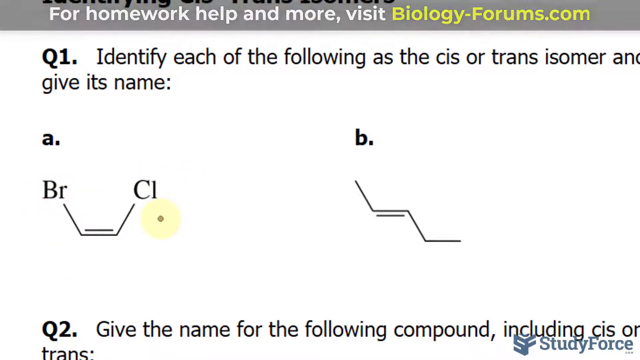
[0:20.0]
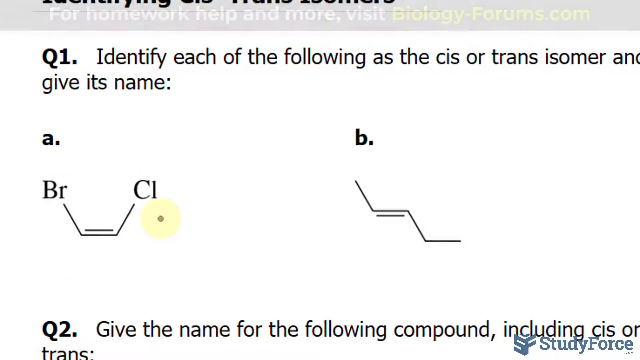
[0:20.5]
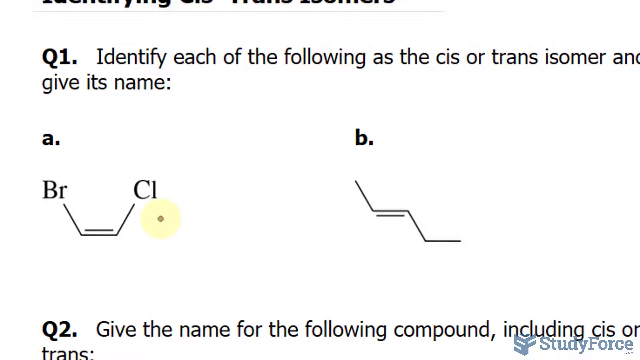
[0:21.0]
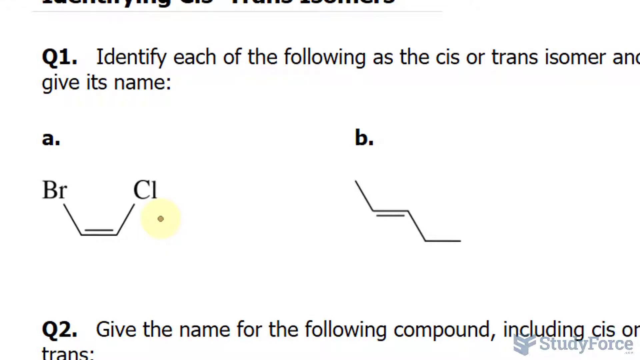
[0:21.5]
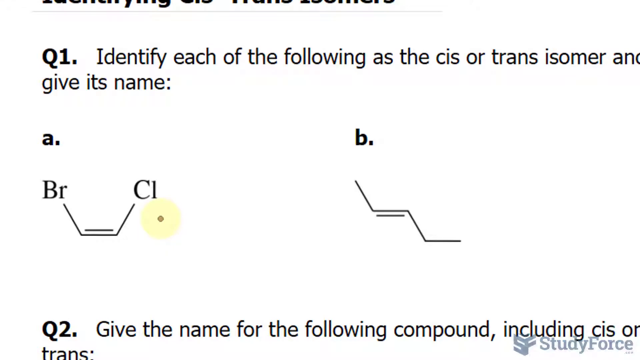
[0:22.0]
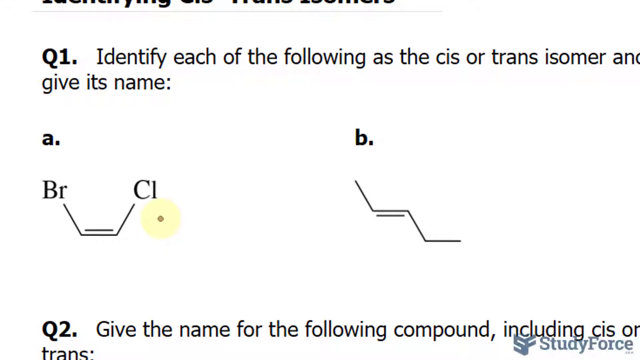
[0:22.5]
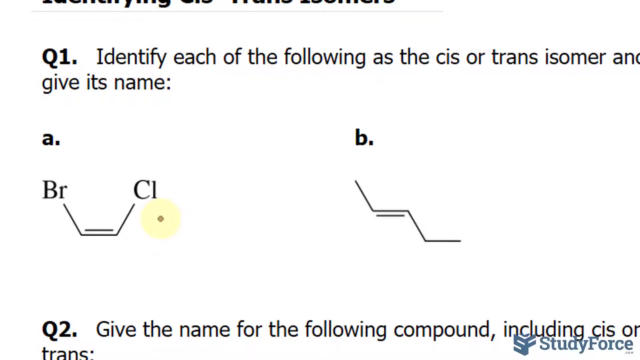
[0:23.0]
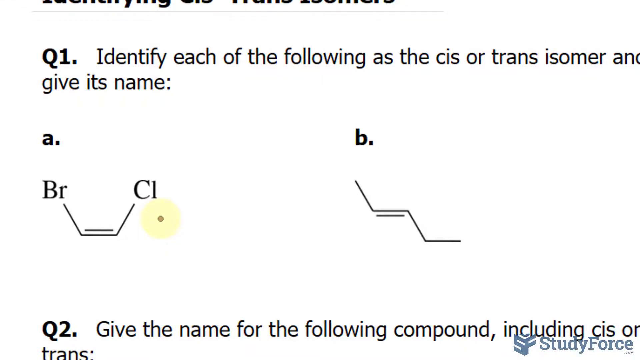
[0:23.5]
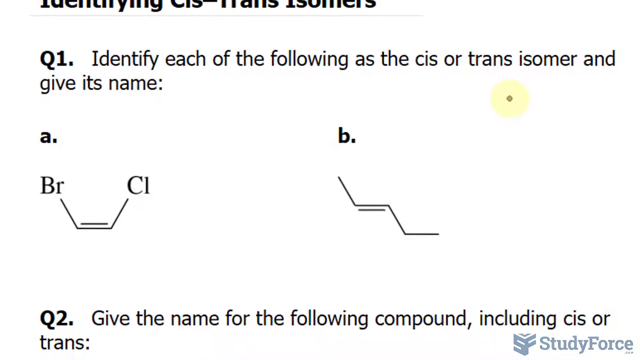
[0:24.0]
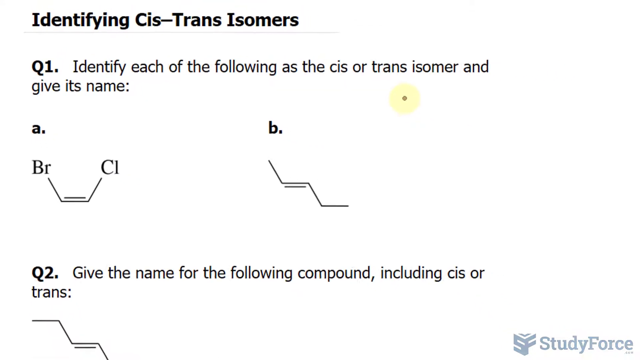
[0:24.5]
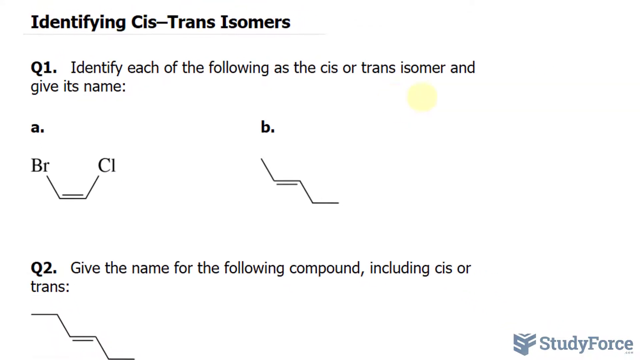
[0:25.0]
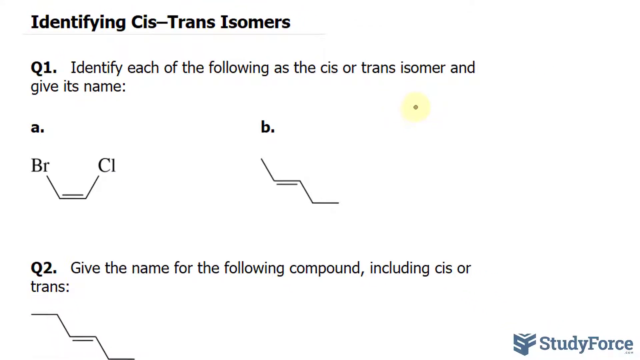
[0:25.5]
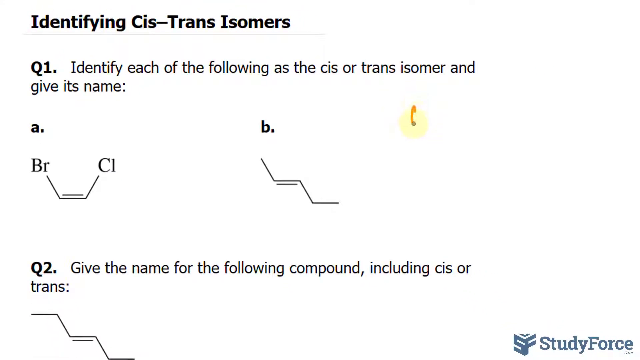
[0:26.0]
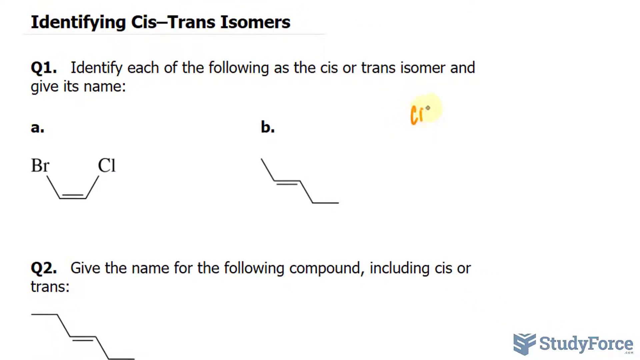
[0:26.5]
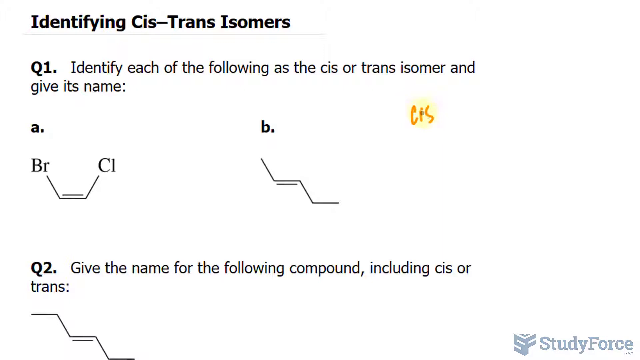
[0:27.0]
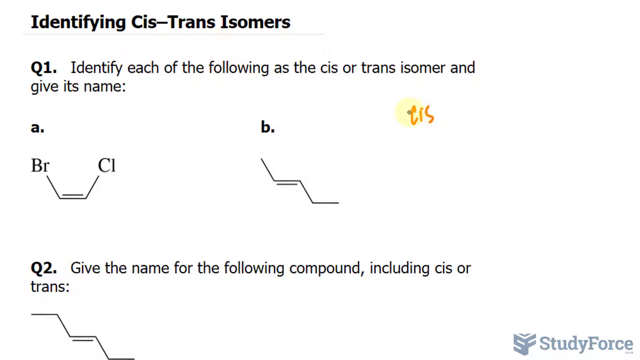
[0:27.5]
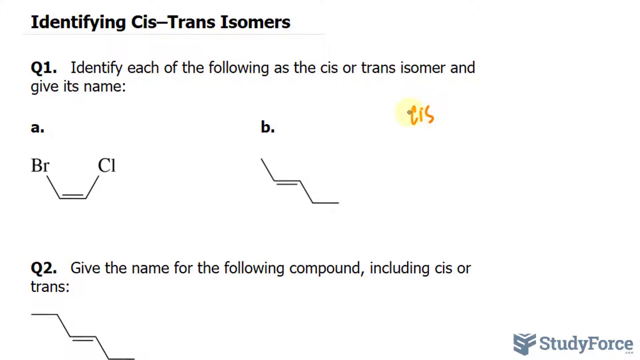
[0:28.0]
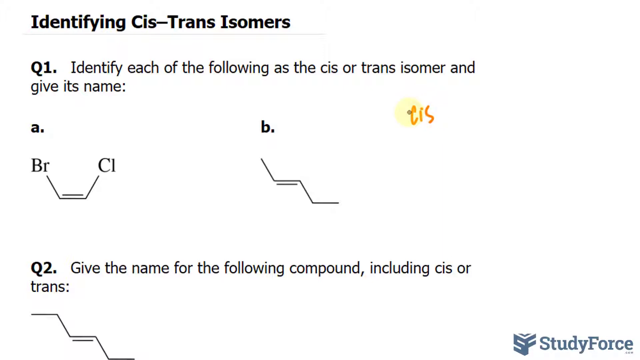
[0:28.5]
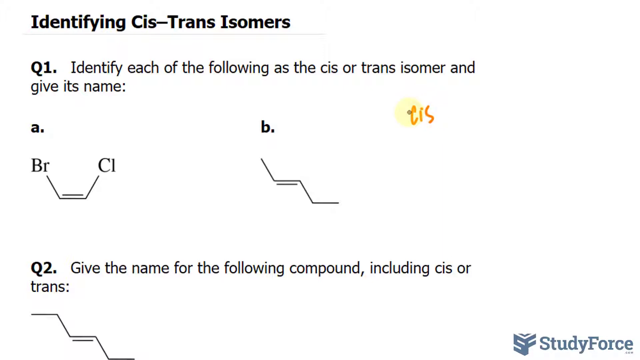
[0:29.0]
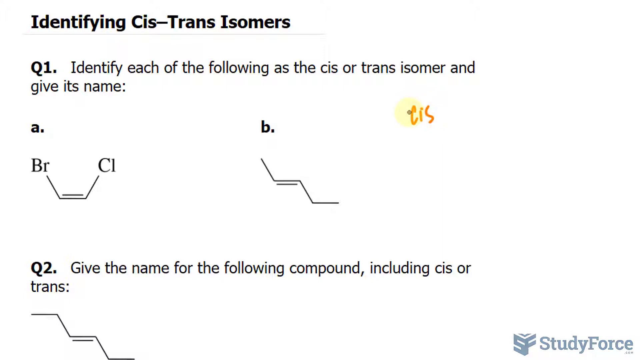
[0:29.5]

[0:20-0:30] A cursor made of a very small circle surrounded by a large yellow concentric circle is visible. At first the frame is focused on the answer option for a specific molecule, and then the frame is enlarged. After that, the cursor writes the word "CIS" in red in the empty space on the right side of the screen. At the bottom right, the word "StudyForce" appears next to the blue logo. The cursor's movement on the screen appears rather fluid and natural.